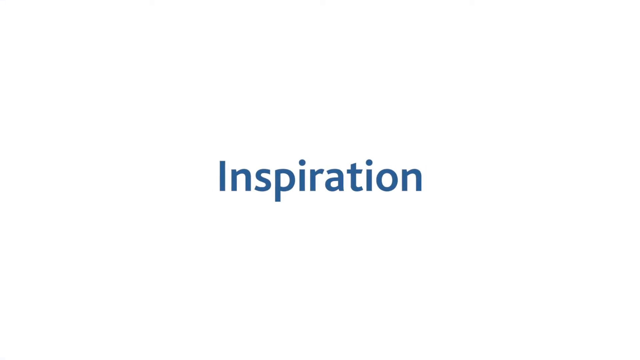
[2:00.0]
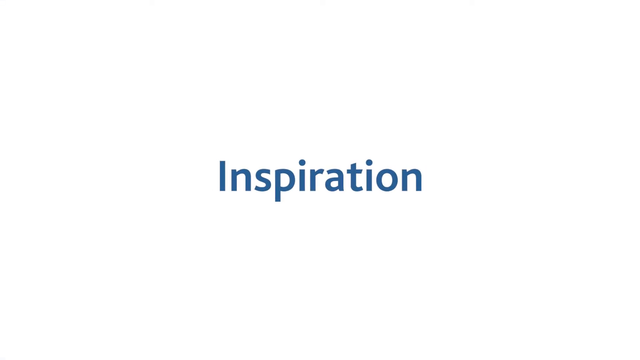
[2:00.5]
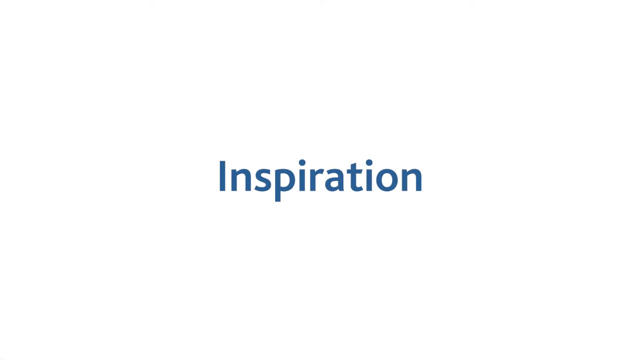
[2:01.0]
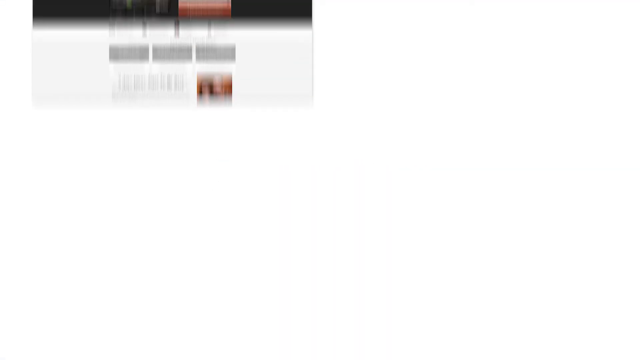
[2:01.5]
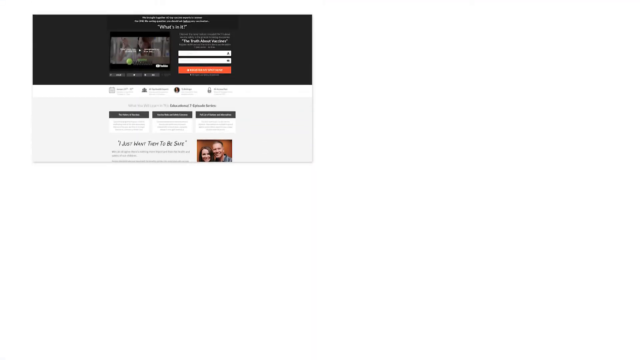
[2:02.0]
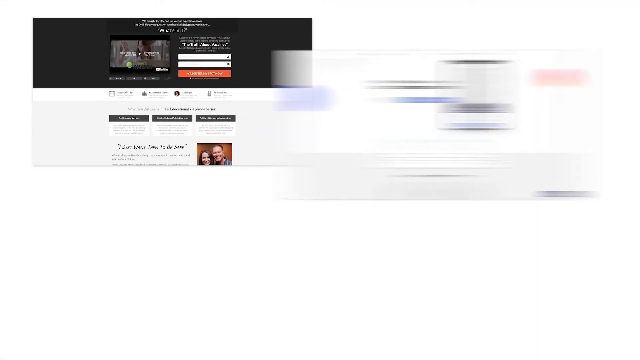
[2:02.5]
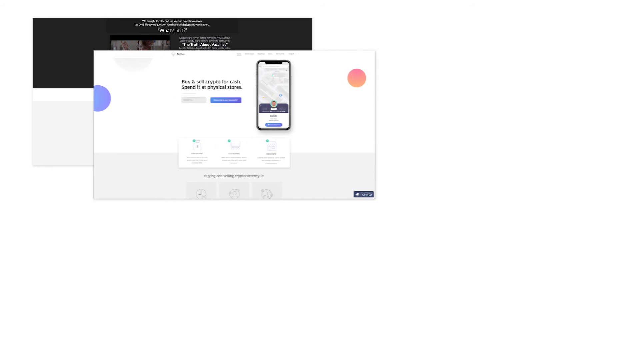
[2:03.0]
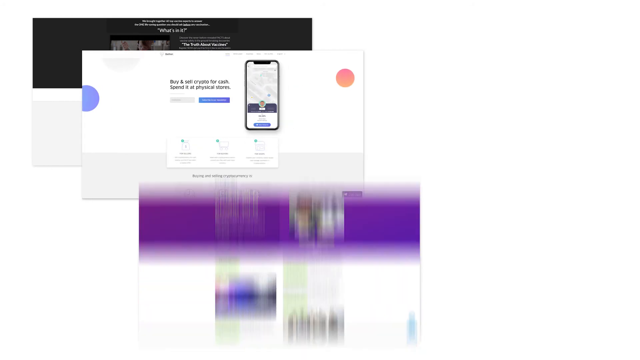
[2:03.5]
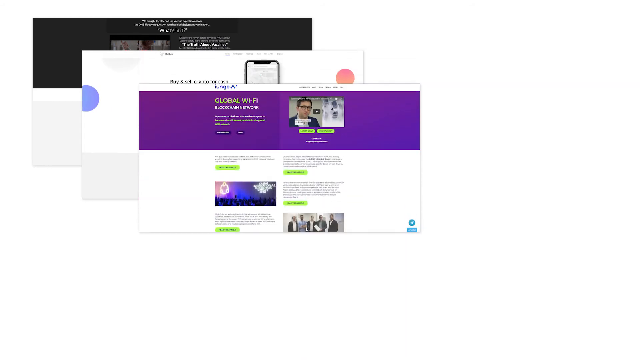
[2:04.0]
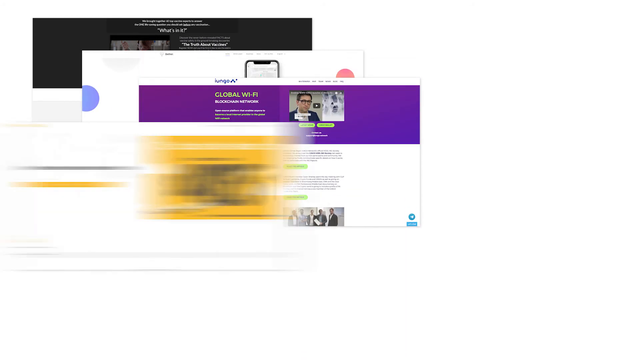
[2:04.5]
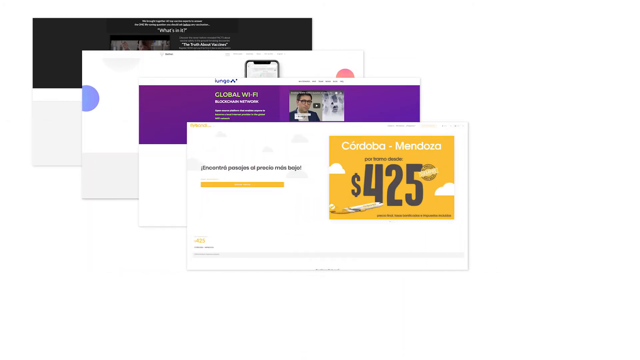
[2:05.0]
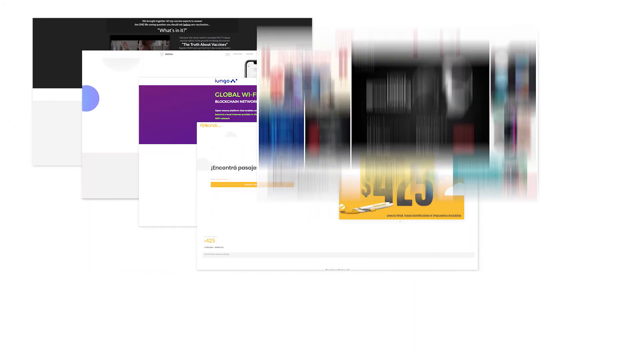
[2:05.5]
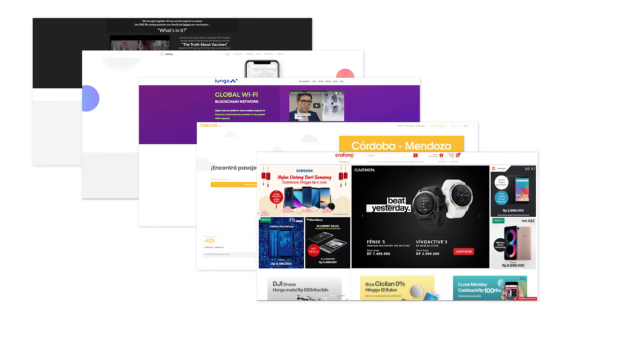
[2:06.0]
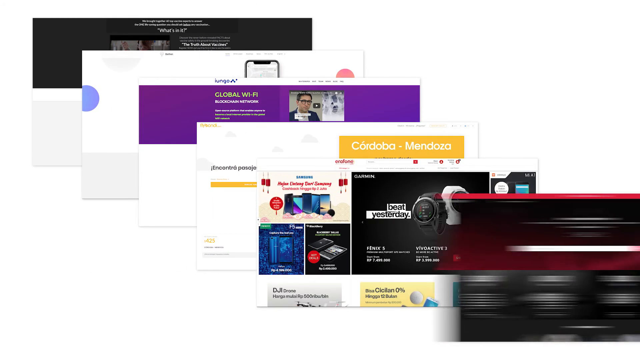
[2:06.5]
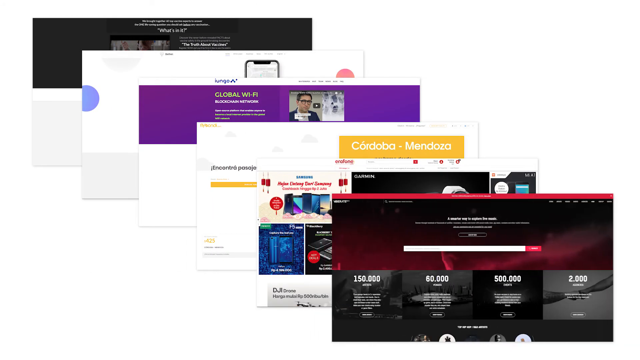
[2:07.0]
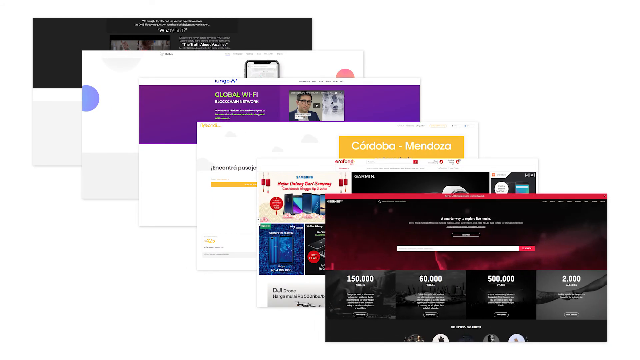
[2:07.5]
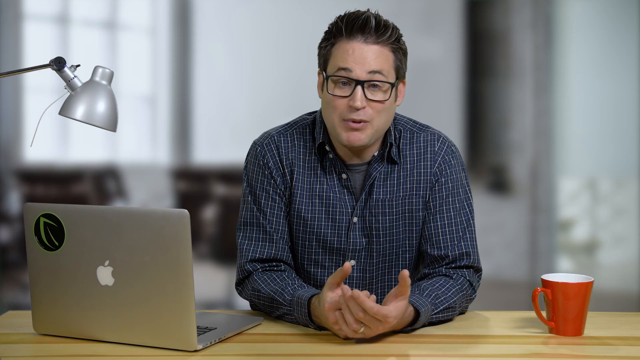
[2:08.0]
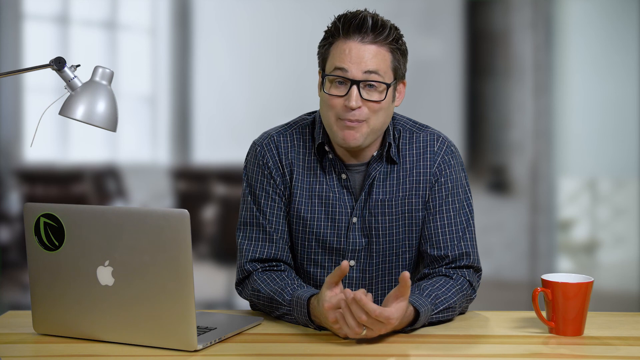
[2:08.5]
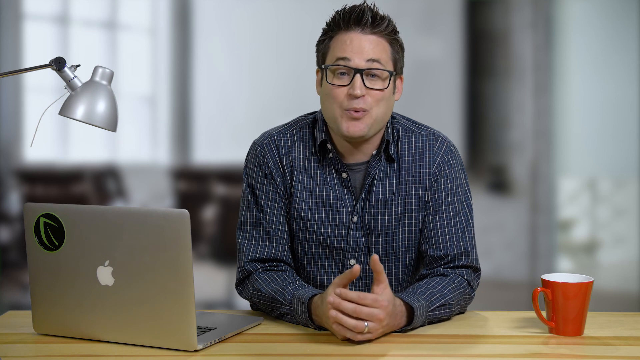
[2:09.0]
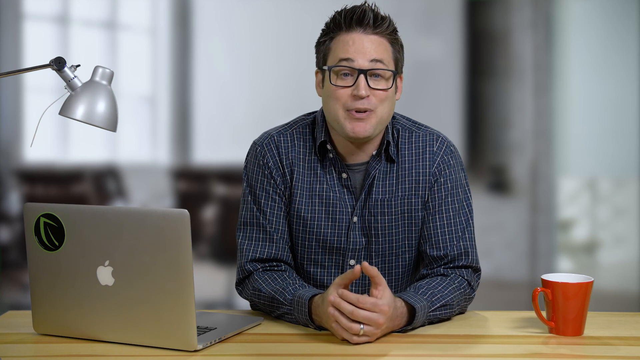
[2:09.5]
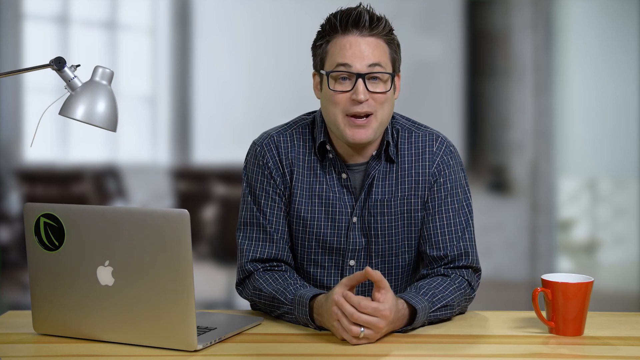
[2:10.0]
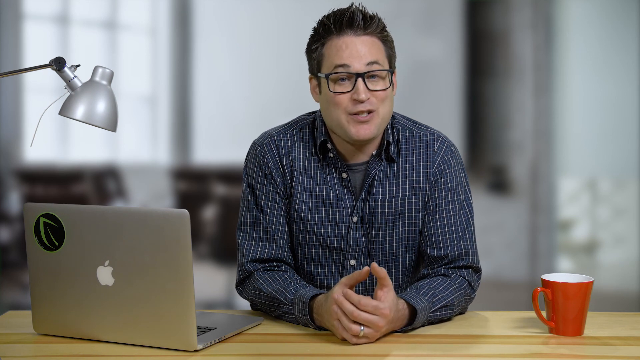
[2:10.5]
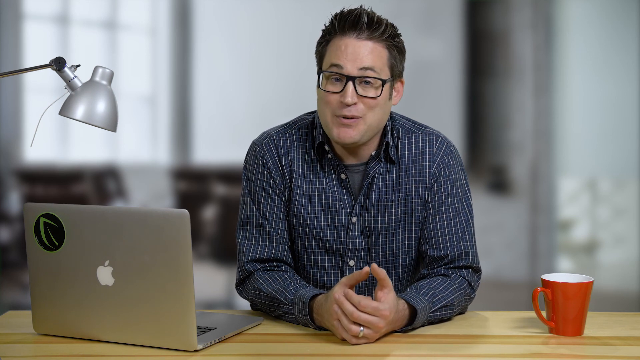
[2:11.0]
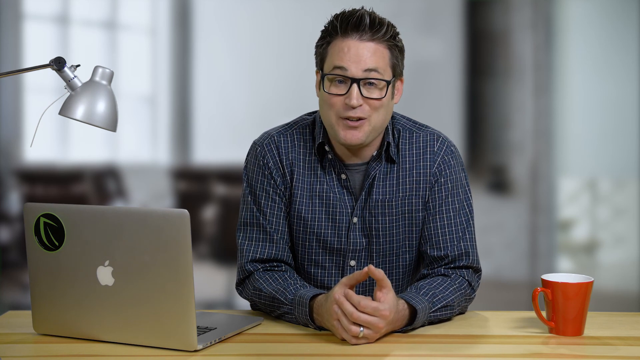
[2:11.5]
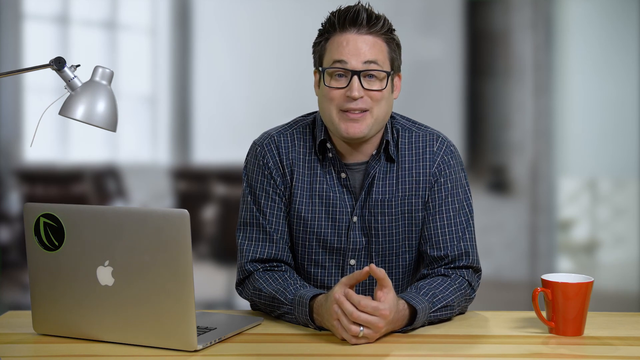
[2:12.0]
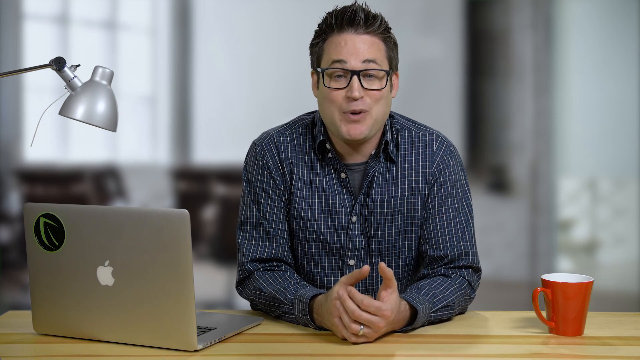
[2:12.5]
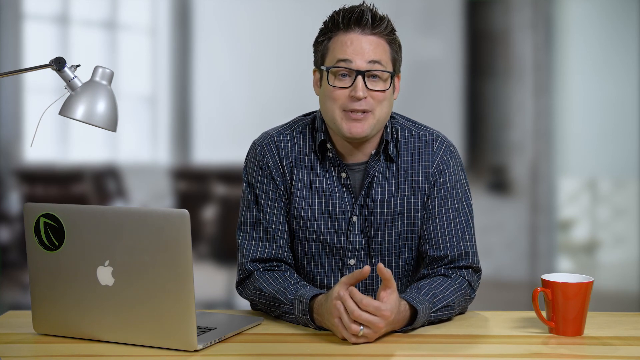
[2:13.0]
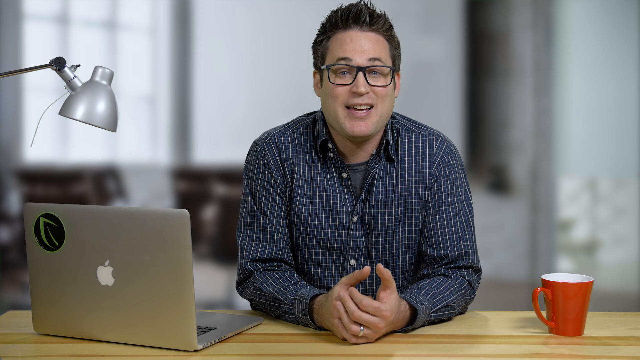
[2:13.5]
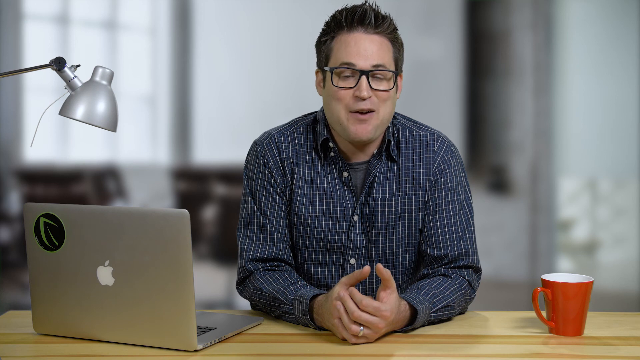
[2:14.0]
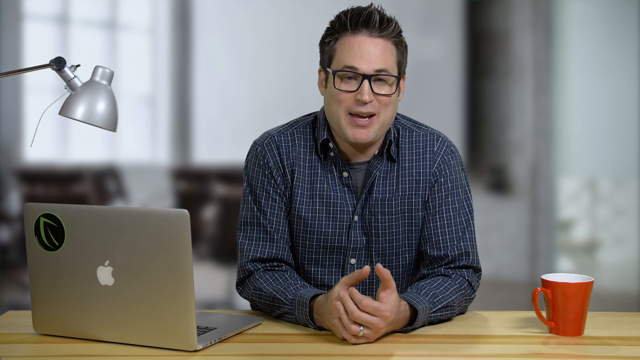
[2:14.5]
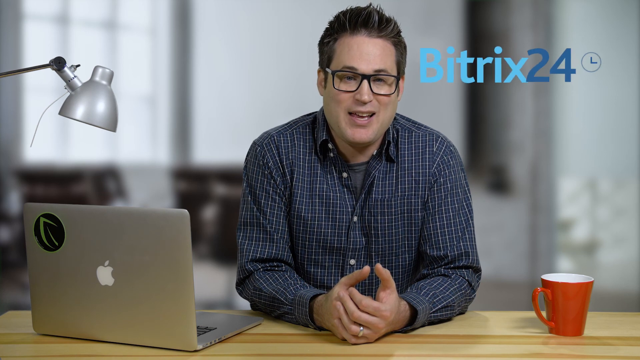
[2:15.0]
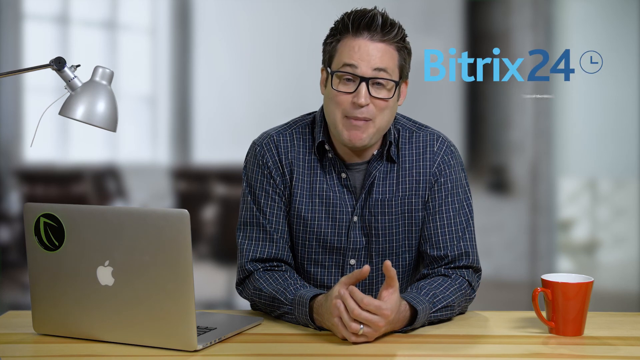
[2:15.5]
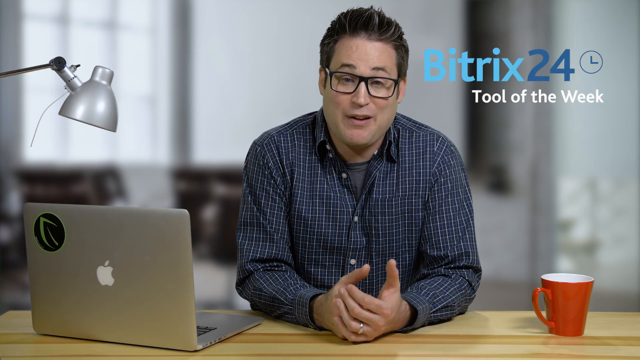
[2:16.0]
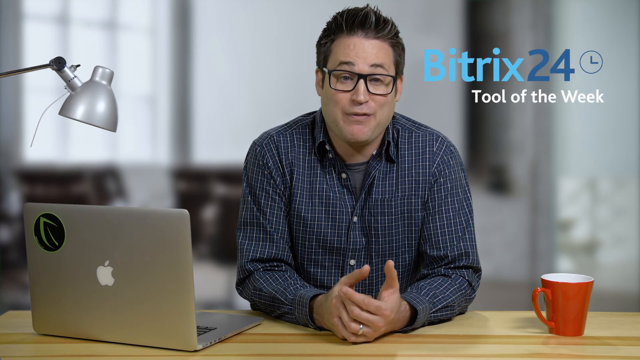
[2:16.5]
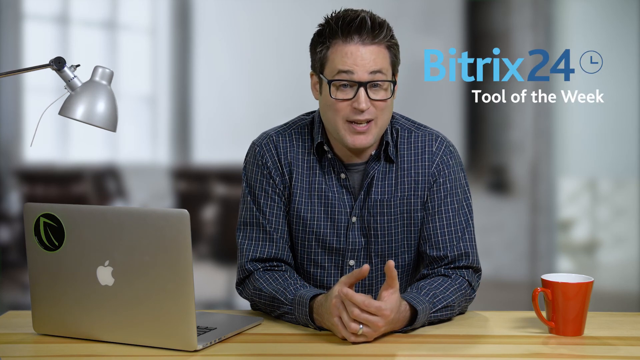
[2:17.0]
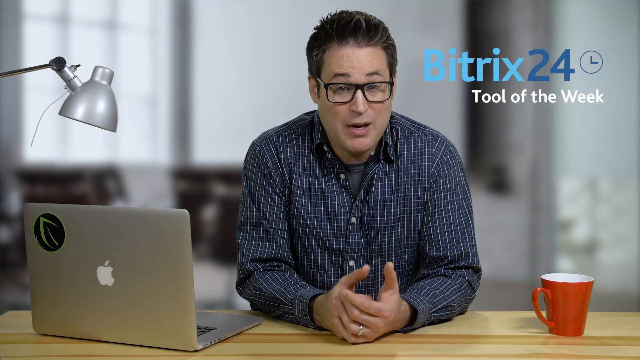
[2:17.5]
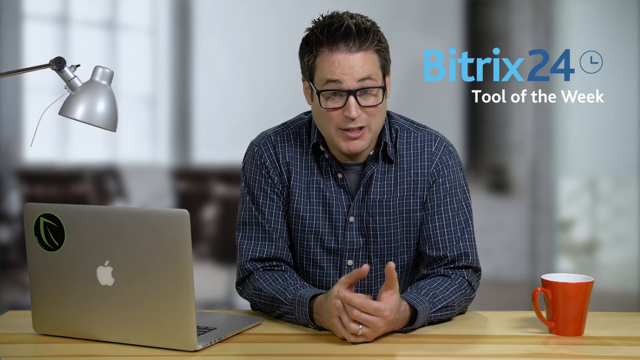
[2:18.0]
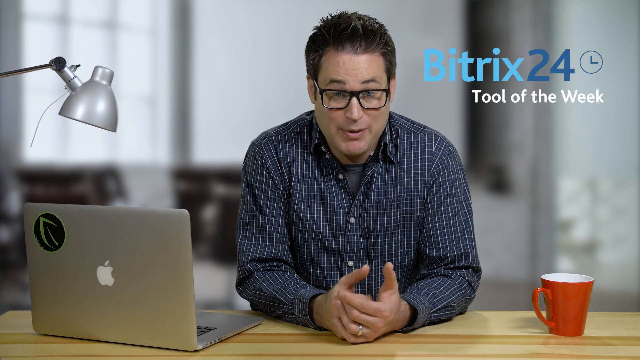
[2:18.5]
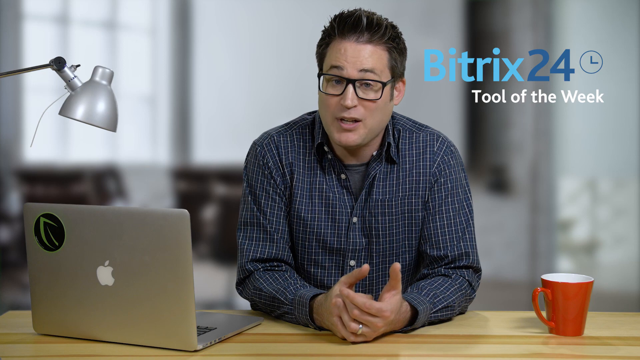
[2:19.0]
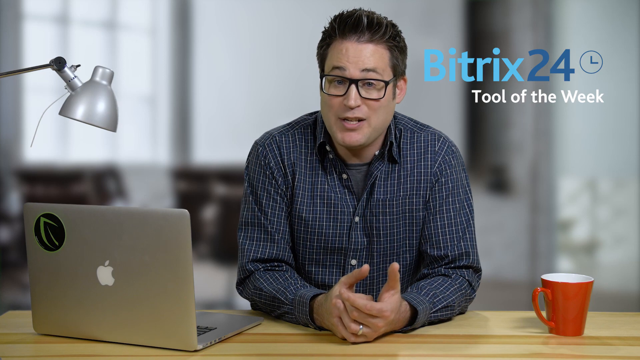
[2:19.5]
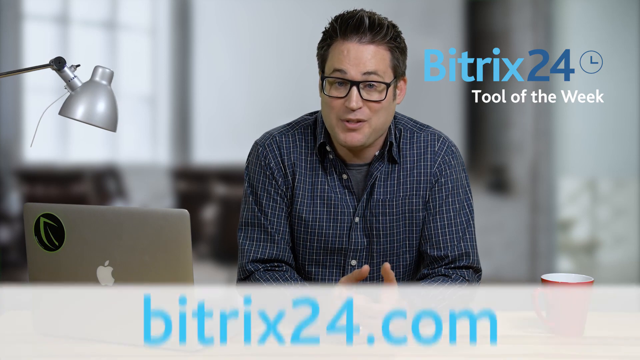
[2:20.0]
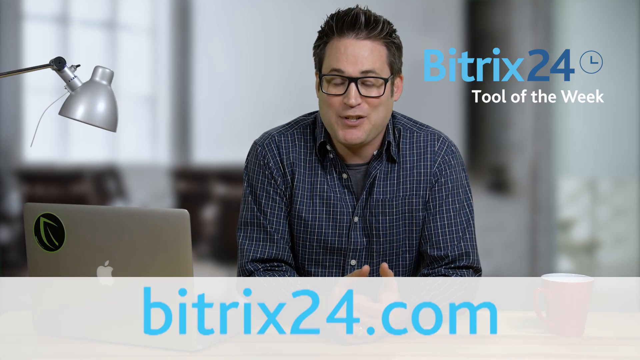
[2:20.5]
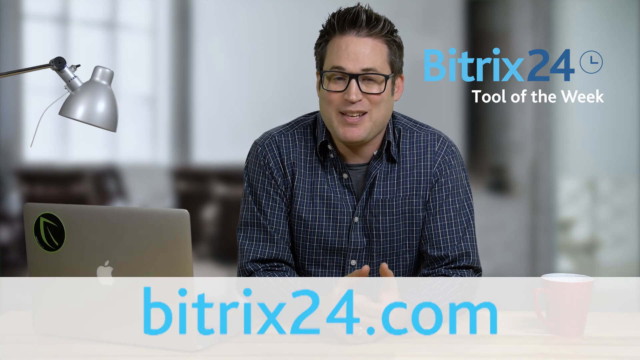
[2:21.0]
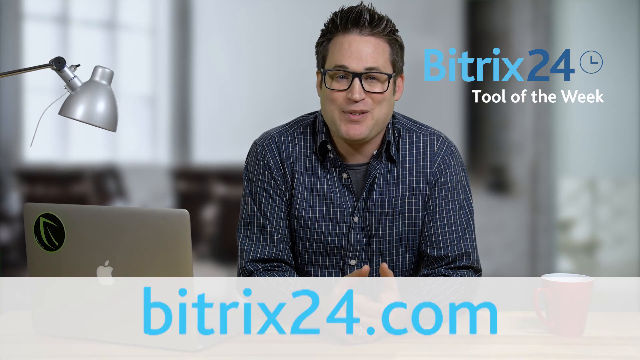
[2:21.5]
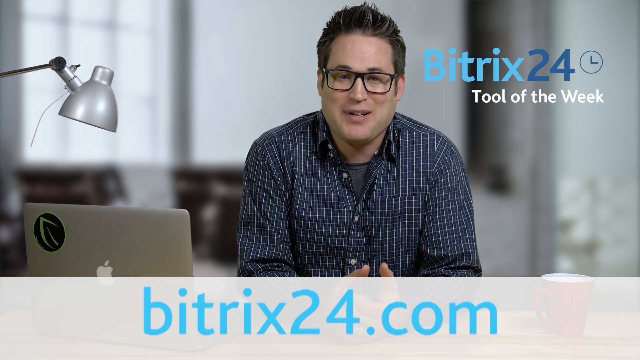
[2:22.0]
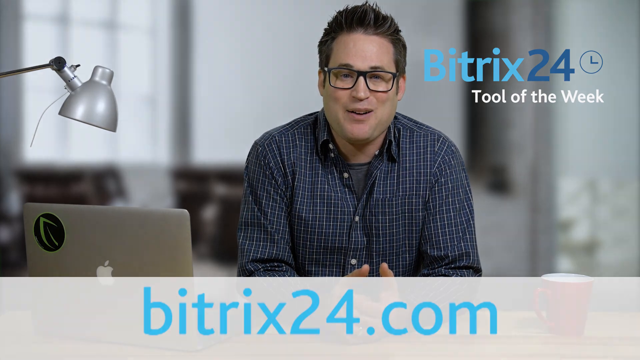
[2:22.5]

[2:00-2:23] The inspiration text pops up behind a white background, and the video transitions to many different sites shown on one screen, with different products, characteristics and designs. It then switches to the man talking in the office setting, apparently giving an overall summary. The text "Bittrex 24 tool of the week", apparently the video's title, appears at the top of the screen, with the website "bittrex24.com" at the bottom. The video then moves to its end, where the man apparently sums up, gives an outro and promotes social links and where to find more of the channel's content.